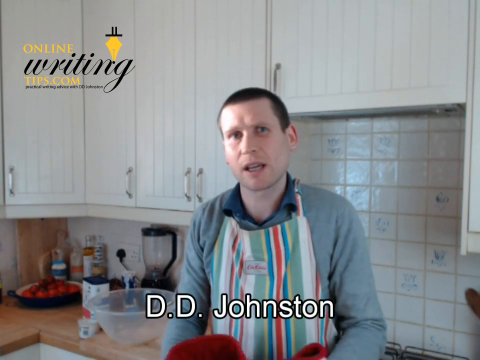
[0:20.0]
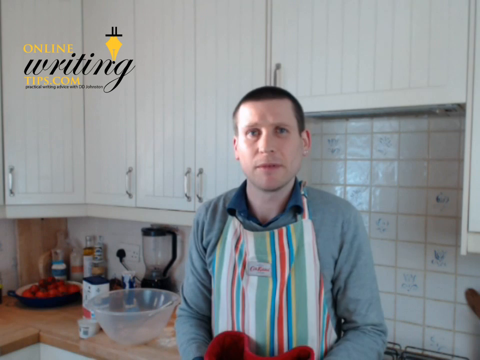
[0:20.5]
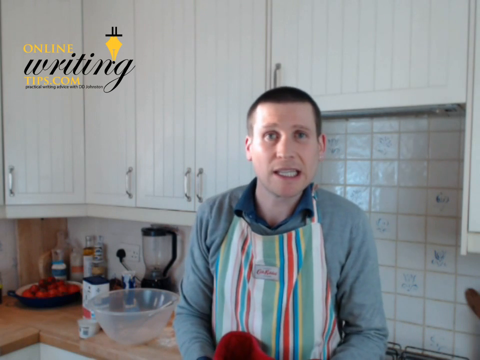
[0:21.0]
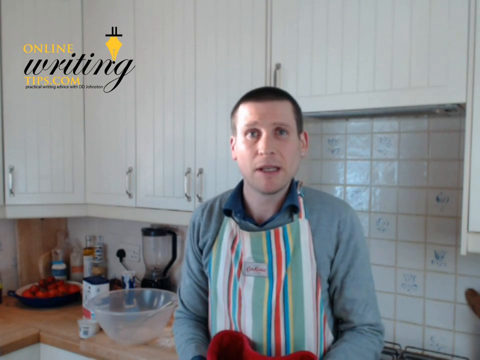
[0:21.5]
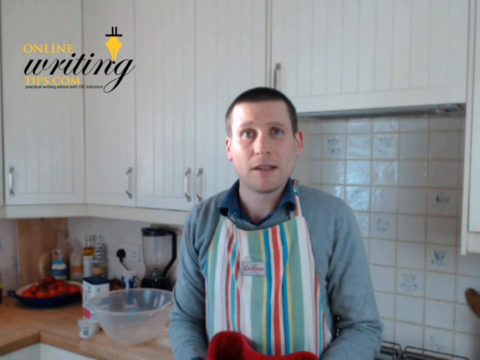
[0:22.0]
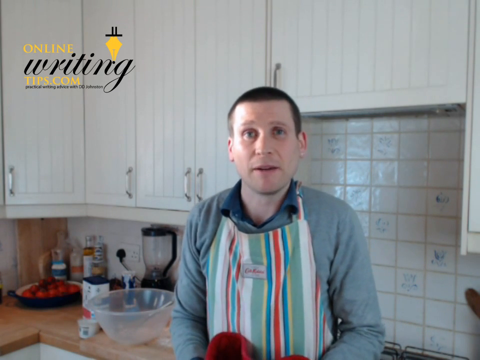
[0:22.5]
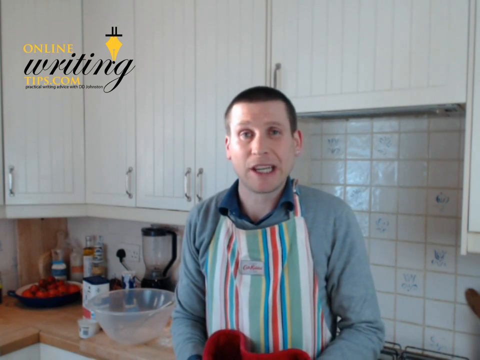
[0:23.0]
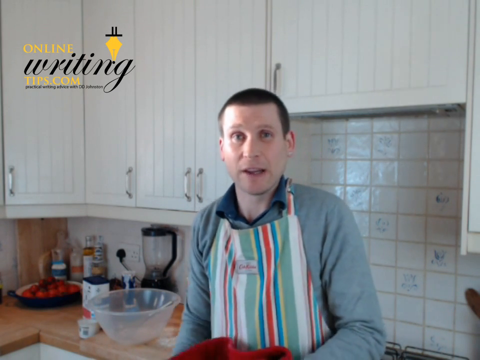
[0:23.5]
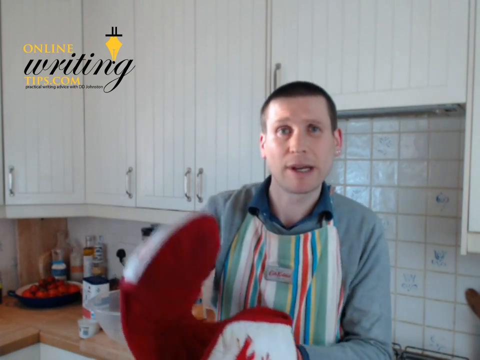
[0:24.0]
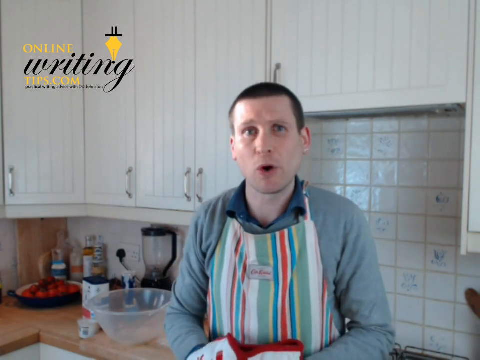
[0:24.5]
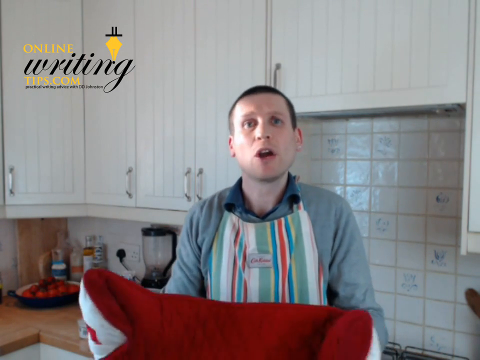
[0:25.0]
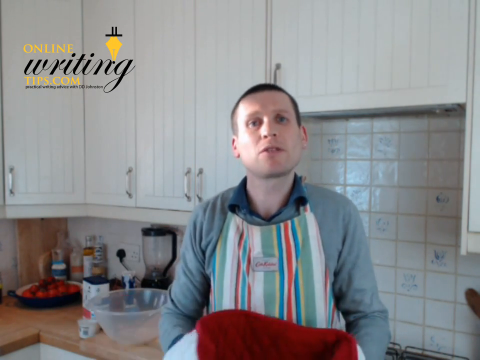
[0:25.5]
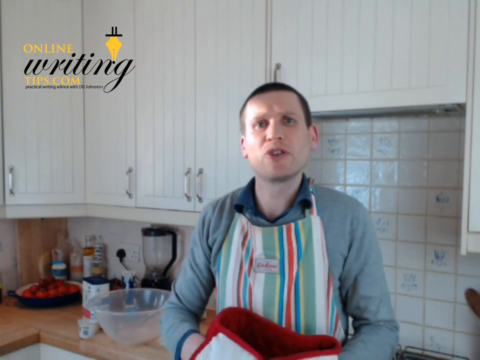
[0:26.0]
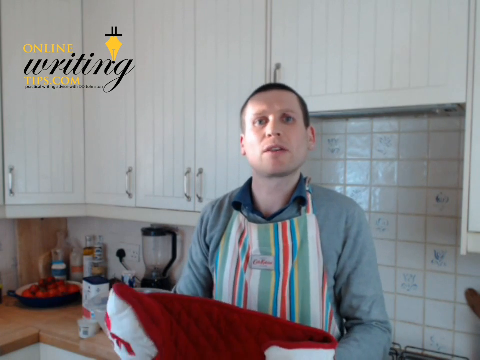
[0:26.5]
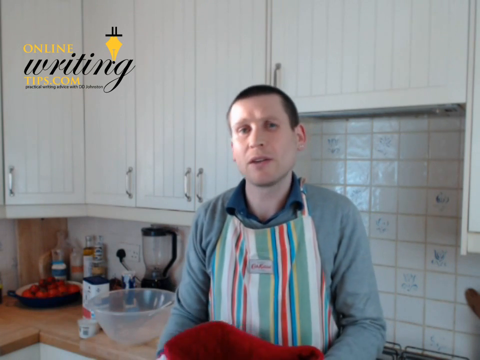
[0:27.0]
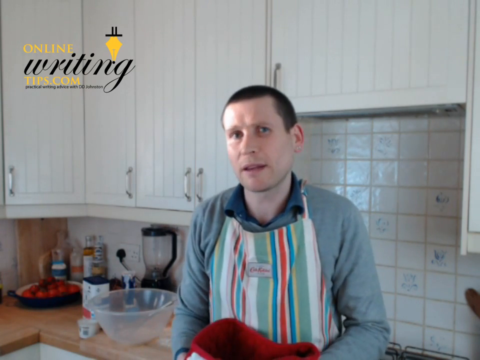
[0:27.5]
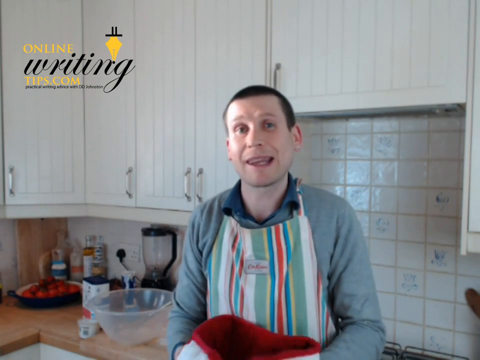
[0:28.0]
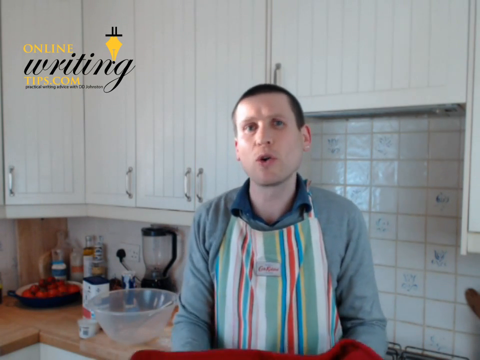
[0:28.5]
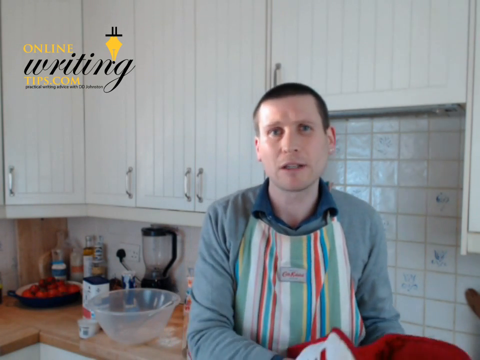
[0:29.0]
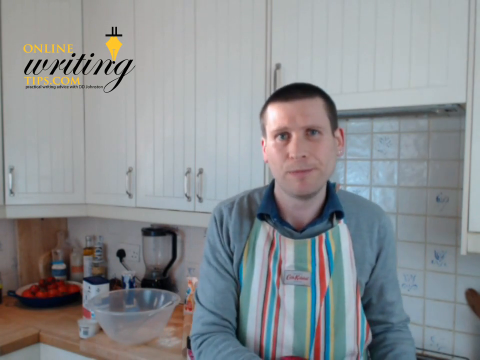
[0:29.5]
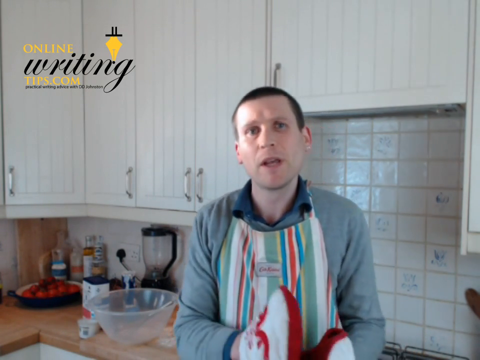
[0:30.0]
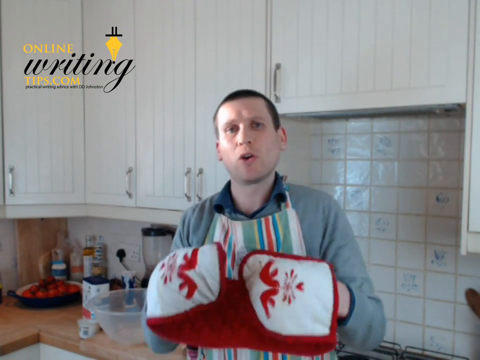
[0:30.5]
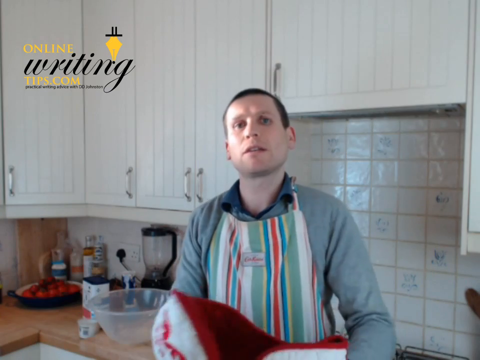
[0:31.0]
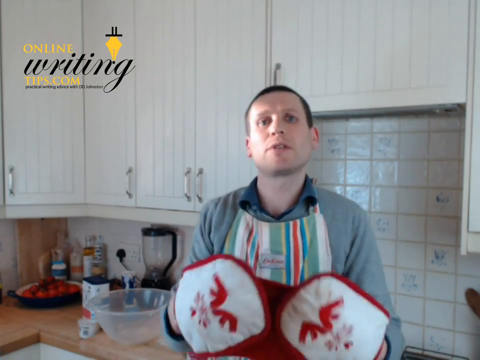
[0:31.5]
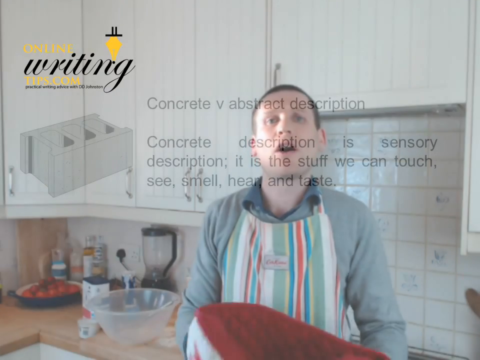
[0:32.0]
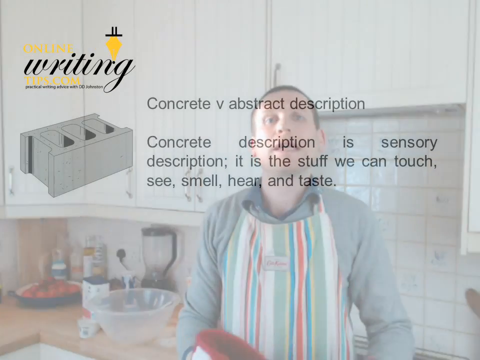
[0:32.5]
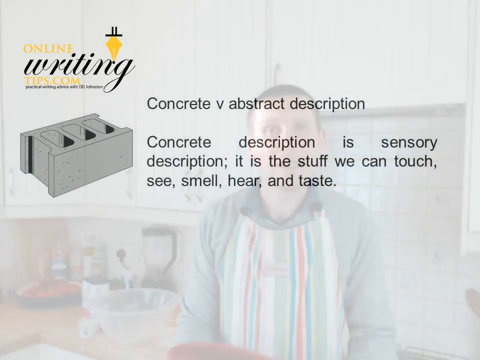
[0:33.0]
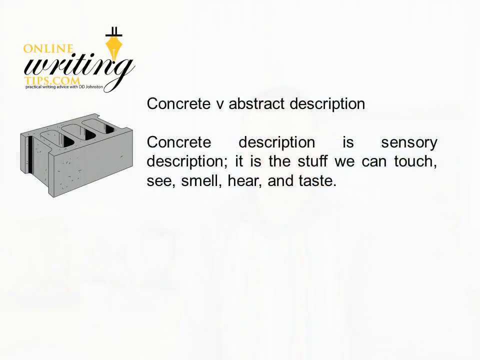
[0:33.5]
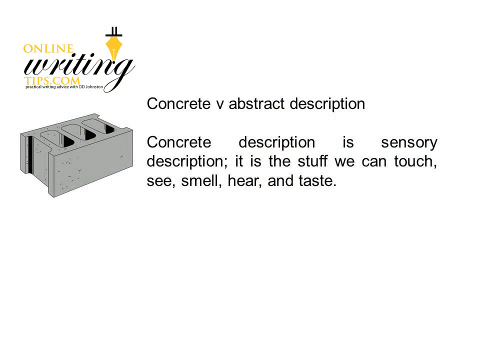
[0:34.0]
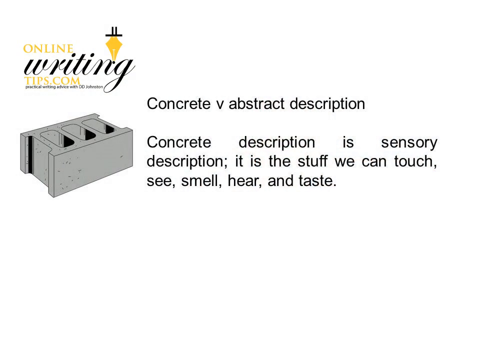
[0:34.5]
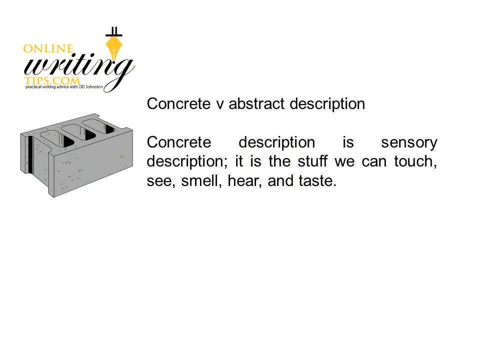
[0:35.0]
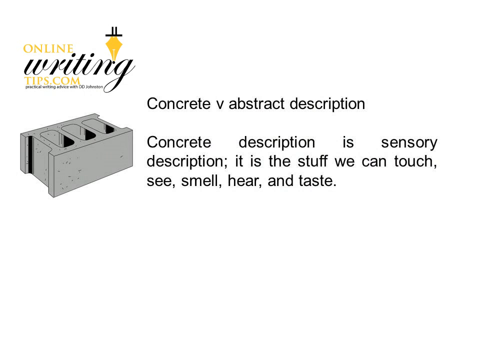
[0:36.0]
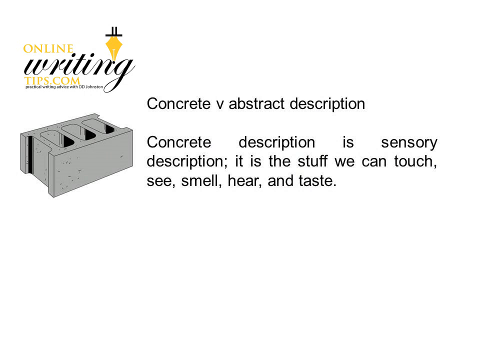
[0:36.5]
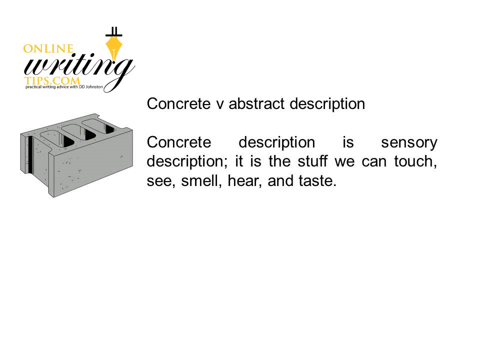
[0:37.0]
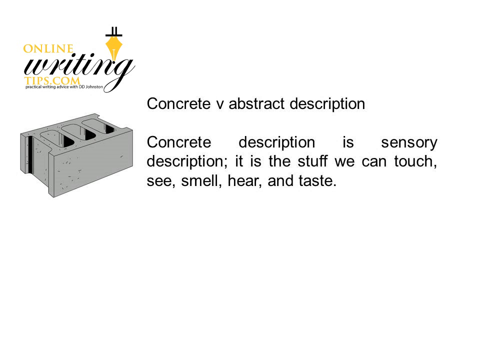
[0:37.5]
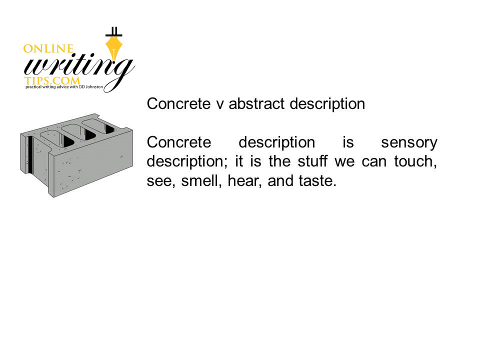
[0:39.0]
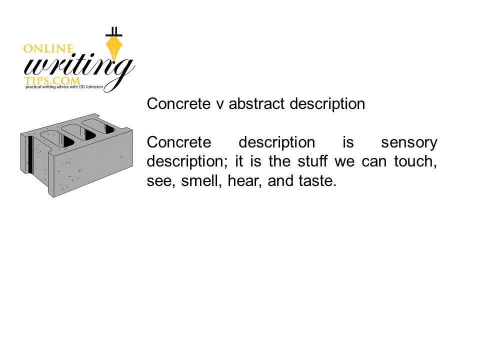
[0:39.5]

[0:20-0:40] A man is standing in a kitchen wearing a gray shirt, a green, red, blue and white striped apron, and red oven mitts. The kitchen background is white with brown countertops, and a bunch of kitchen items are behind him on the counter. In the top left corner is a logo that says "OnlineWritingTips.com" with an old-style writing pen above it. He talks to the camera, moving his hands quite a bit, and "D.D.Johnson" is listed in white letters in front of him. He continues talking to the camera in a very animated way. The scene then changes to a picture of a definition containing a picture of a concrete brick. The text says "Concrete vs. Abstract Description." Underneath, it says "Concrete Description is Sensory Description. It is the stuff we can touch, see, smell, hear, and taste."